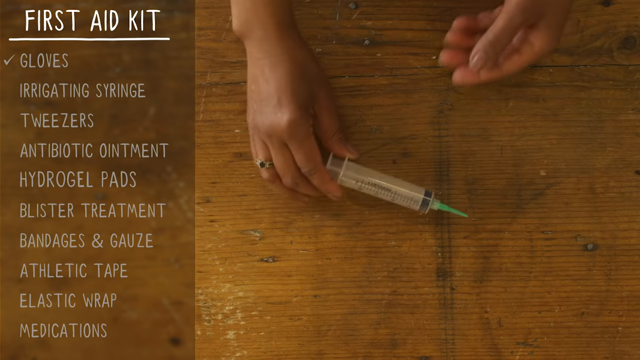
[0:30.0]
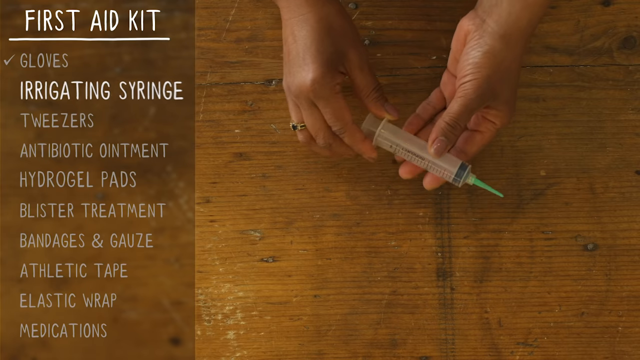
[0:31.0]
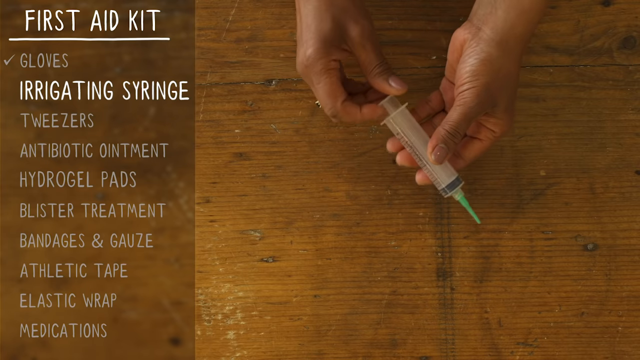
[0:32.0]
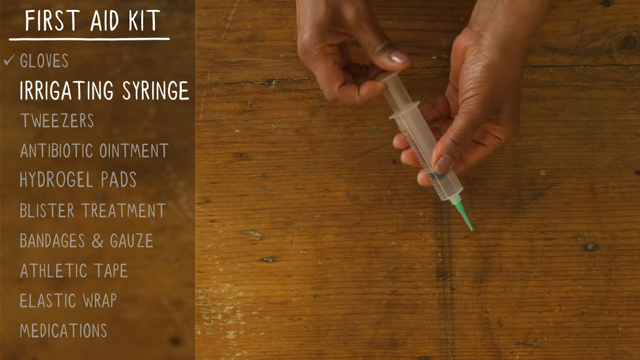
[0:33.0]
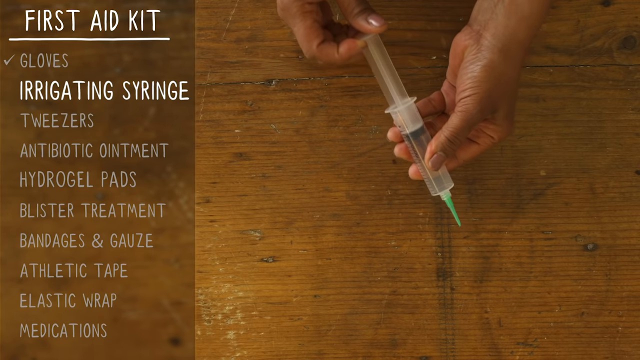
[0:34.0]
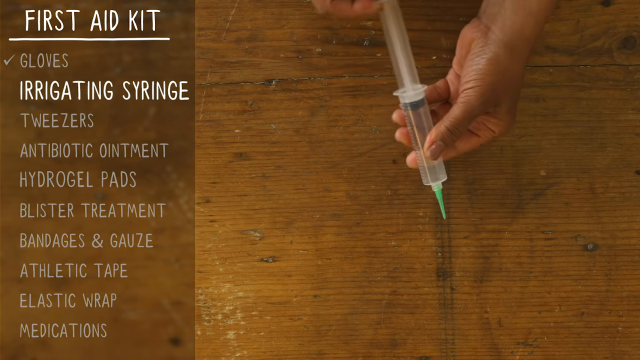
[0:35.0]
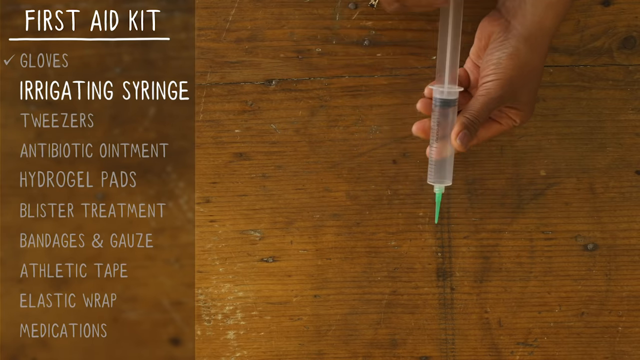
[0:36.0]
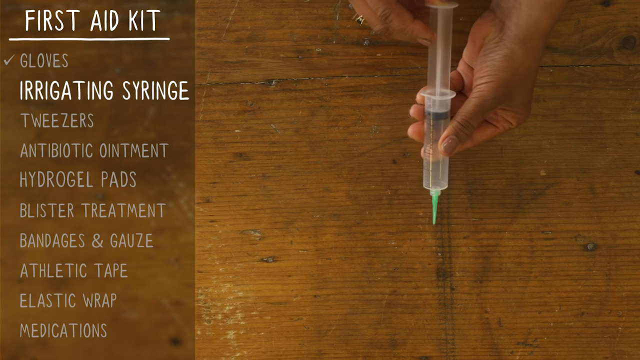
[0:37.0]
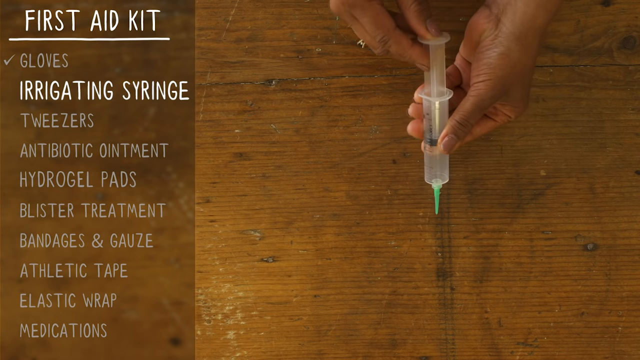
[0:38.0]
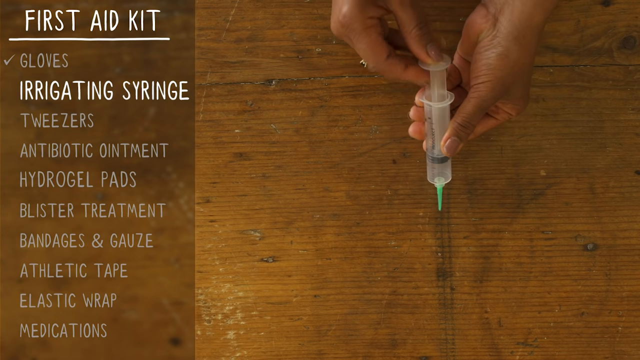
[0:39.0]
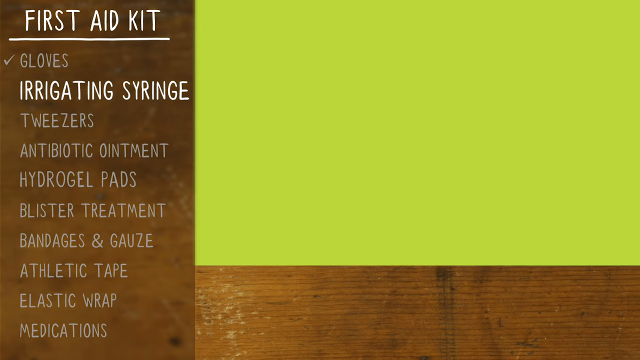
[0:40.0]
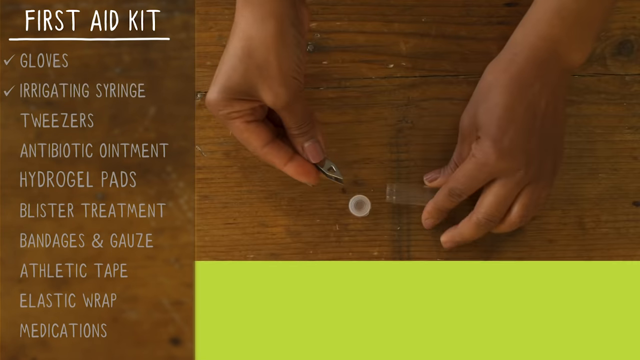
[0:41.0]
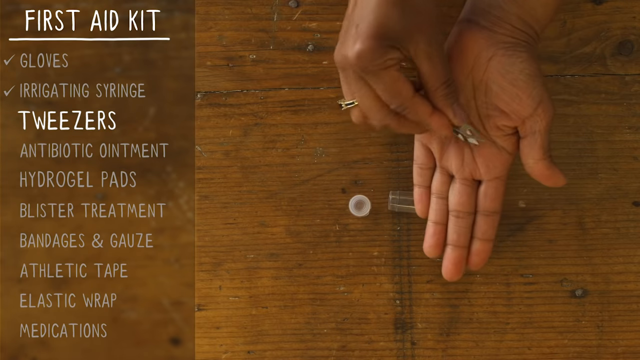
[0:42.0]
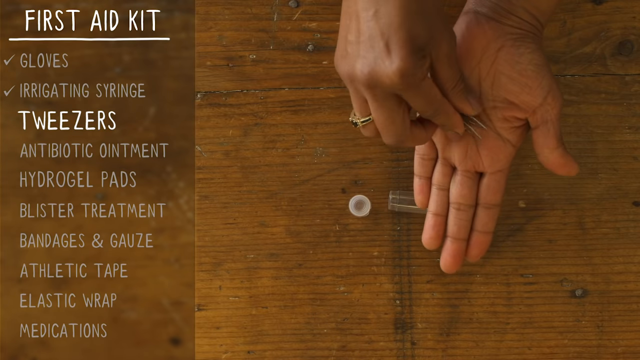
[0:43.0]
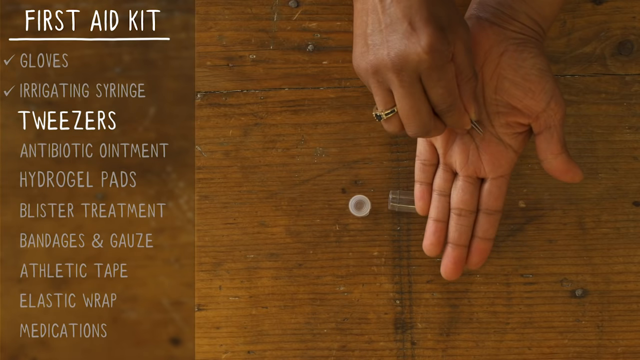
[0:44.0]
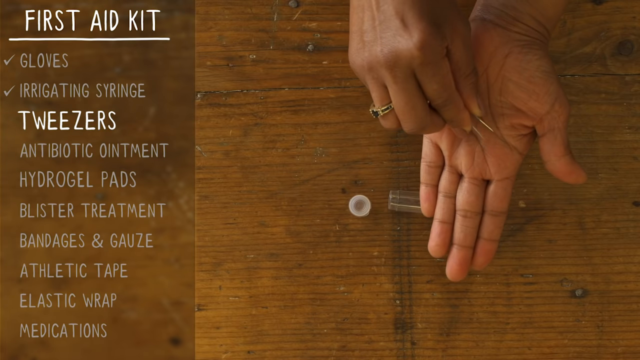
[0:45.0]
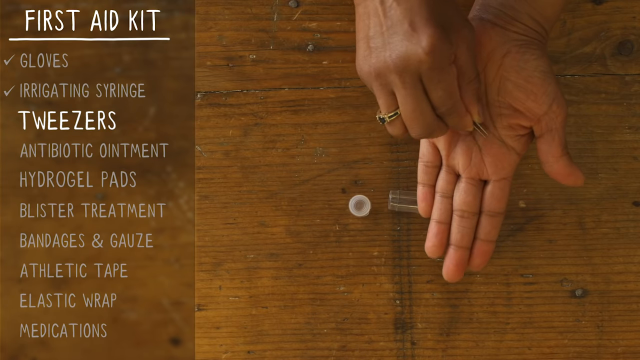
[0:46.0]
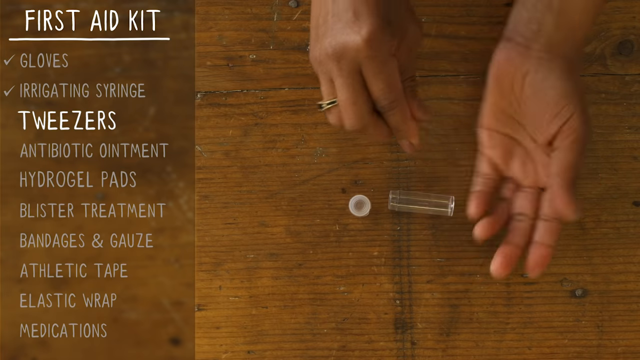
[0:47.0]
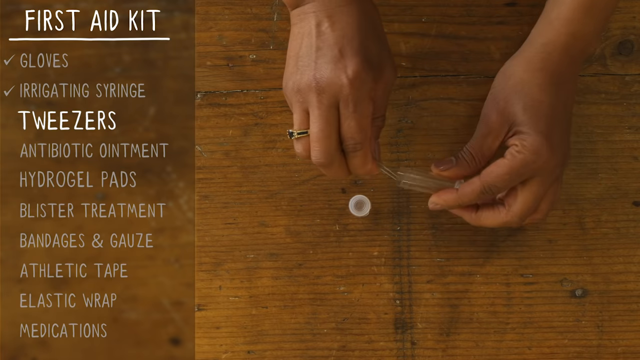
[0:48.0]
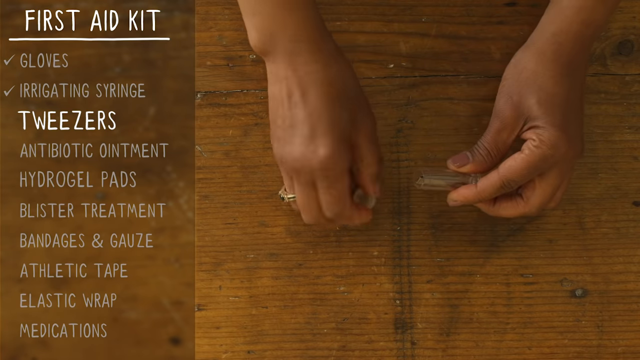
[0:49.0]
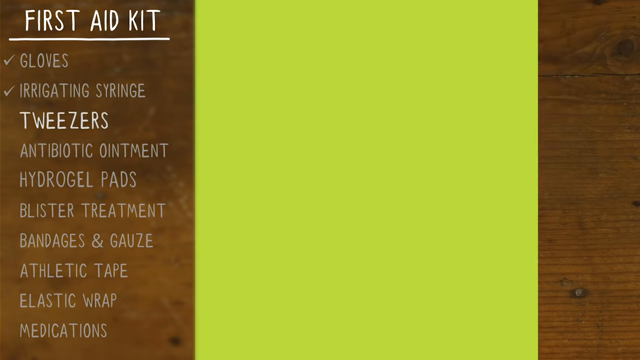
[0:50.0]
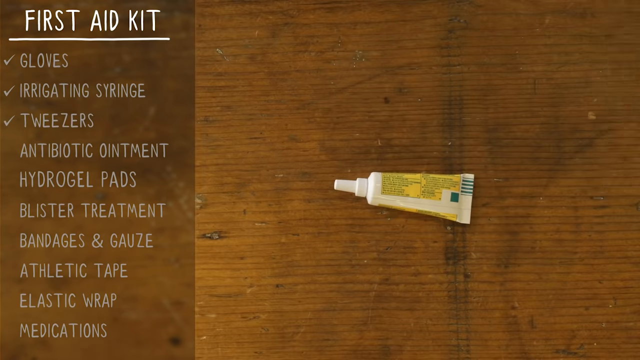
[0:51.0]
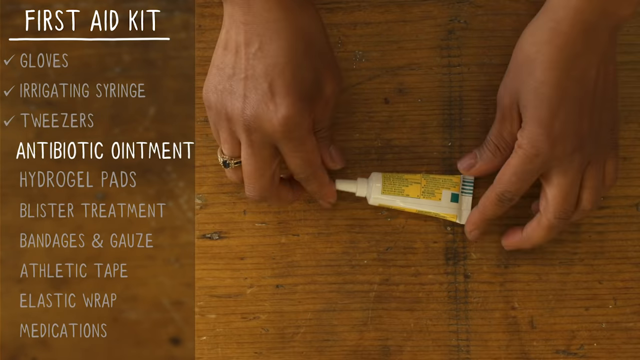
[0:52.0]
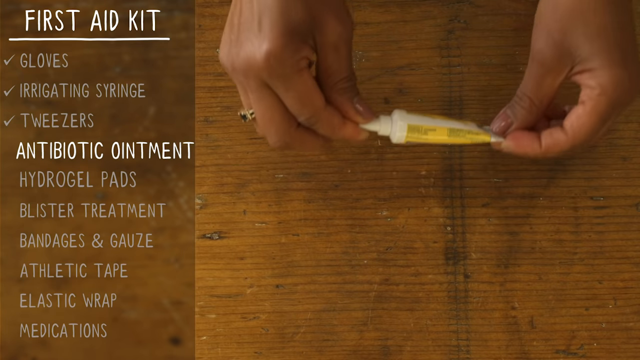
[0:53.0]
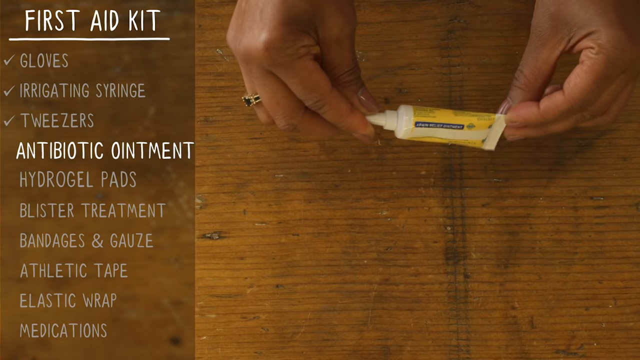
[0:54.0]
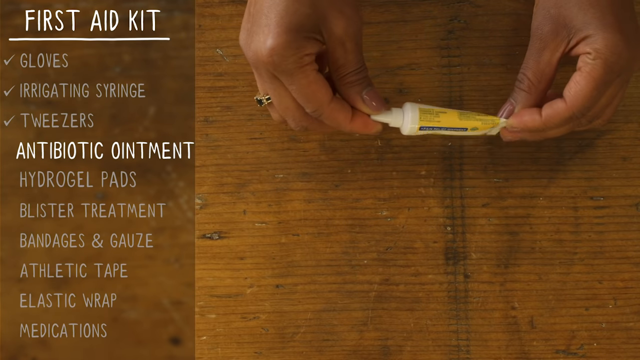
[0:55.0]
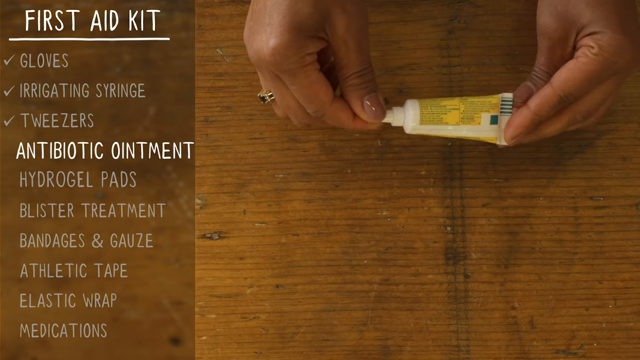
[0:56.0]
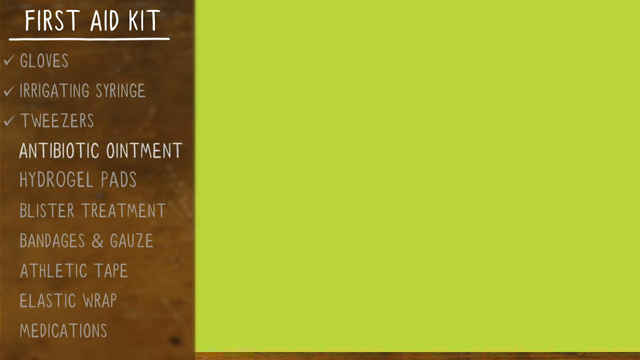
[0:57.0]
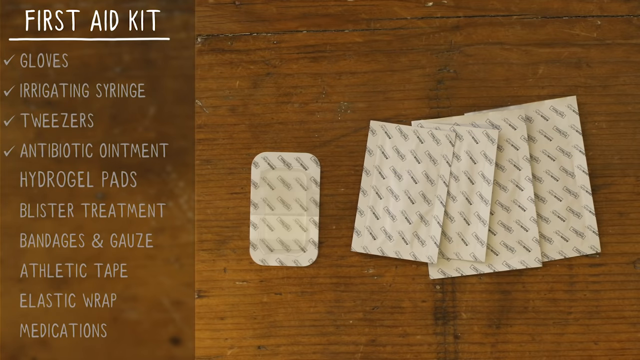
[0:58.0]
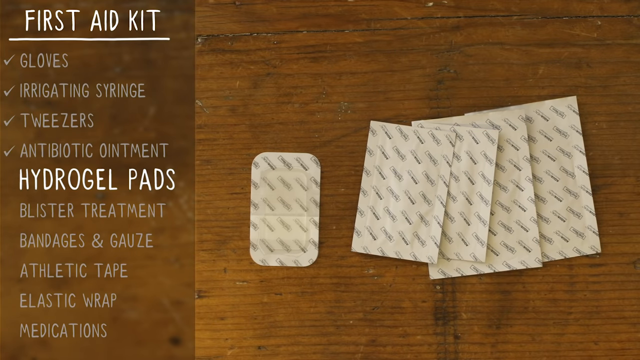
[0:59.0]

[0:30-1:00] A list of items found in a first aid kit reads "first aid kit, gloves, irrigating syringe, tweezers, antibiotic ointment, hydrogel pads, blister treatment, bandages and gauze, athletic tape, elastic wrap, and medication". A pair of African American hands demonstrates several items from the kit. First the hands pick up the irrigating syringe, pull the plunger back and then push it forward. Next they open a clear cylindrical container holding small metal tweezers, squeeze the tweezers shut a couple of times and place them back inside the container. The hands then pick up a small container of Neosporin antibiotic ointment. After this, a close-up shows five hydrogel pads of different sizes.